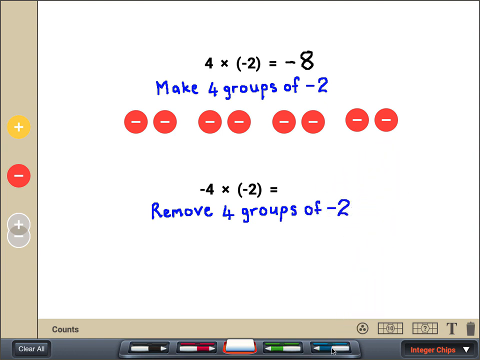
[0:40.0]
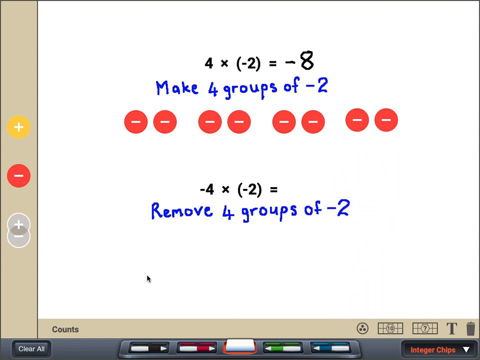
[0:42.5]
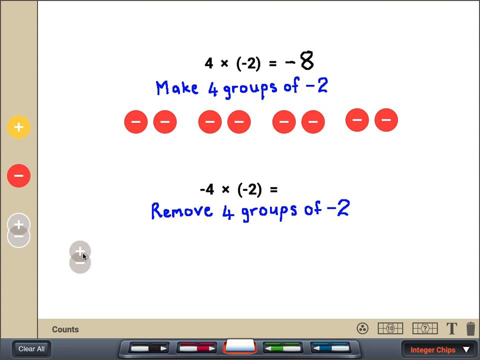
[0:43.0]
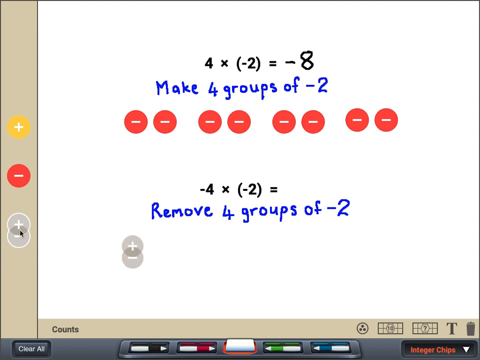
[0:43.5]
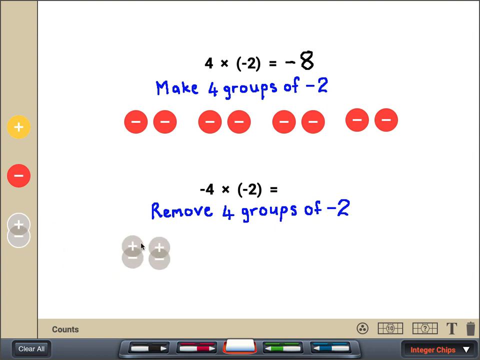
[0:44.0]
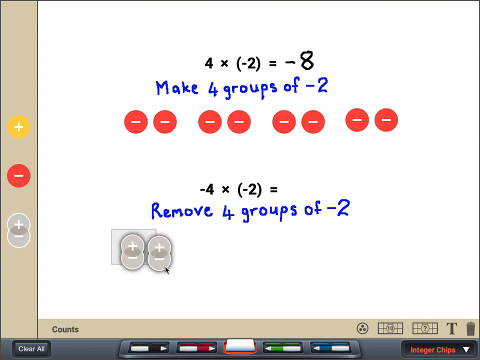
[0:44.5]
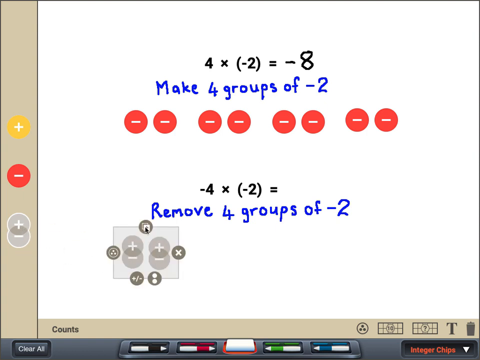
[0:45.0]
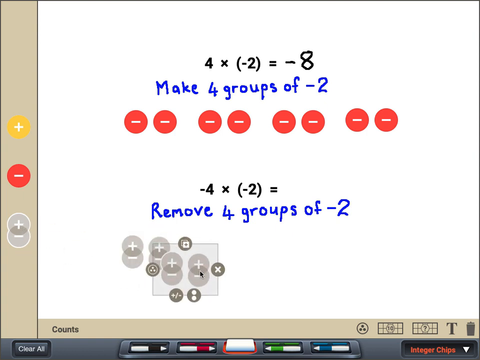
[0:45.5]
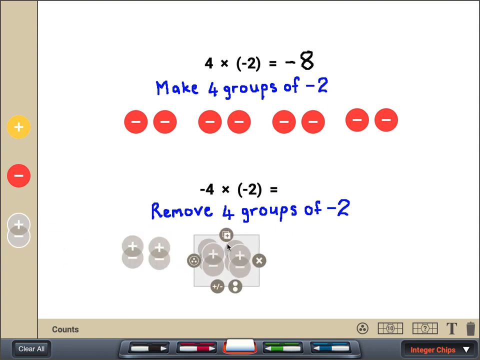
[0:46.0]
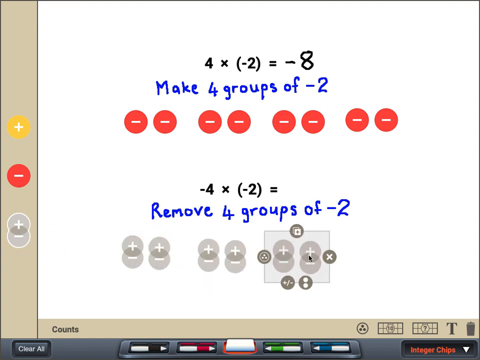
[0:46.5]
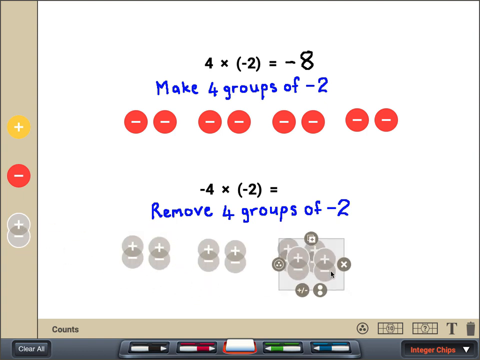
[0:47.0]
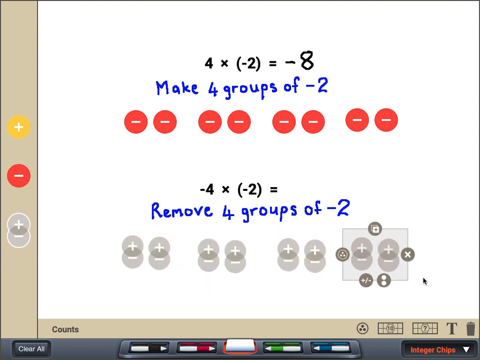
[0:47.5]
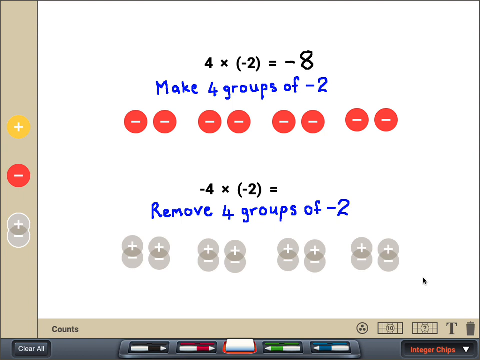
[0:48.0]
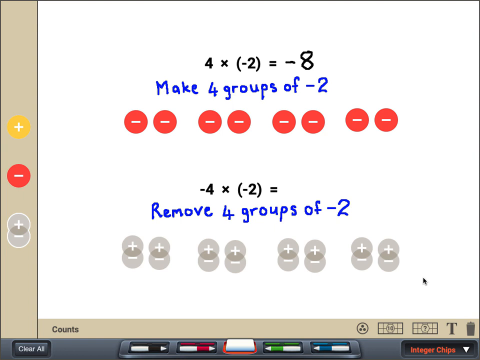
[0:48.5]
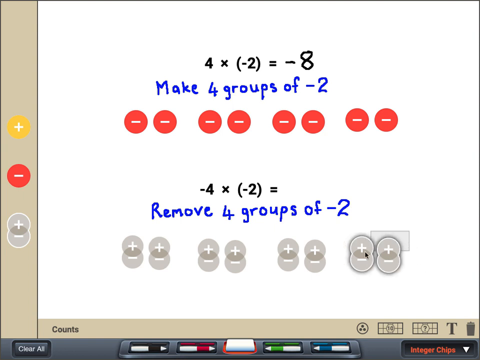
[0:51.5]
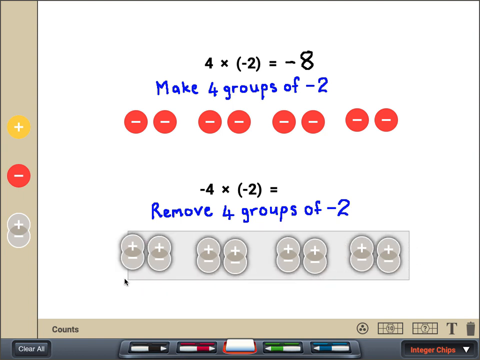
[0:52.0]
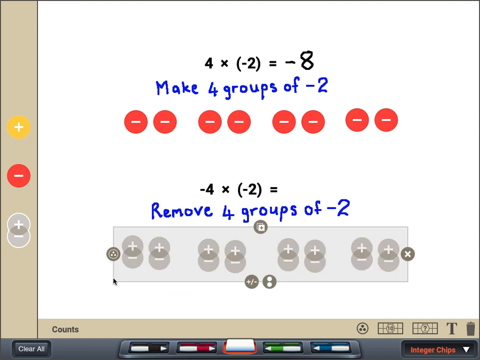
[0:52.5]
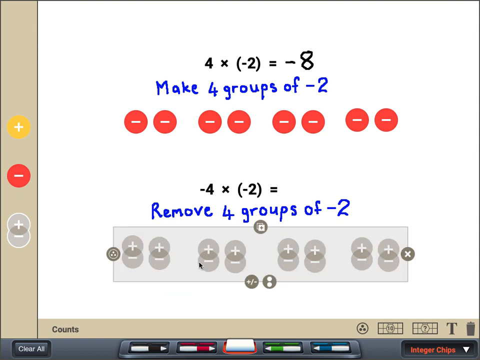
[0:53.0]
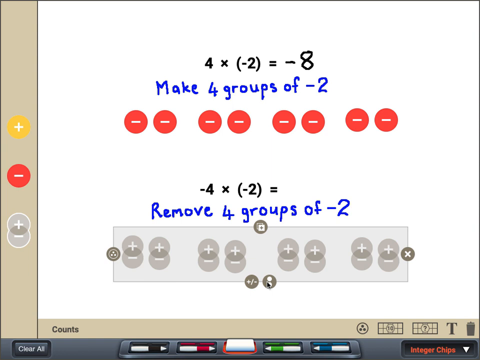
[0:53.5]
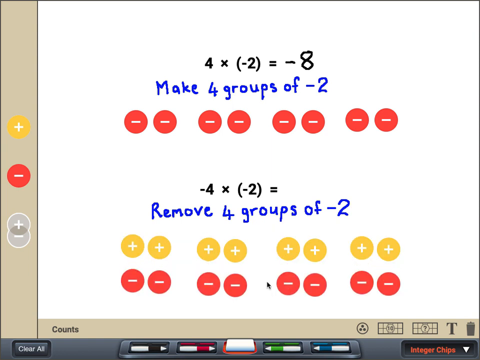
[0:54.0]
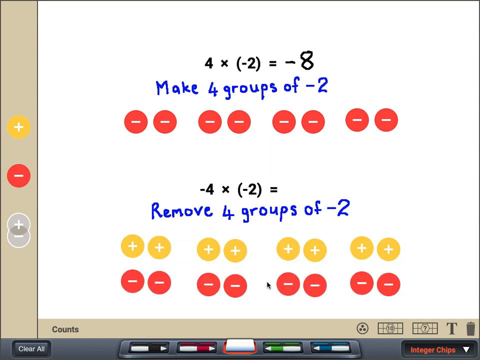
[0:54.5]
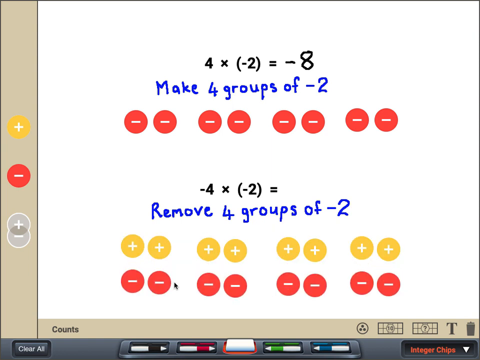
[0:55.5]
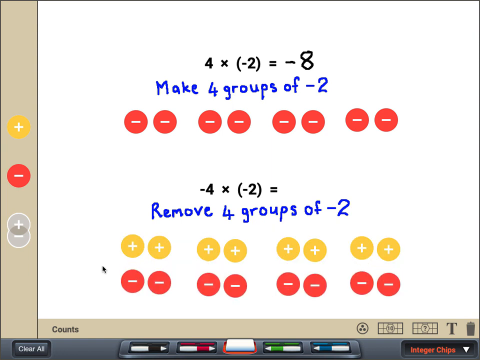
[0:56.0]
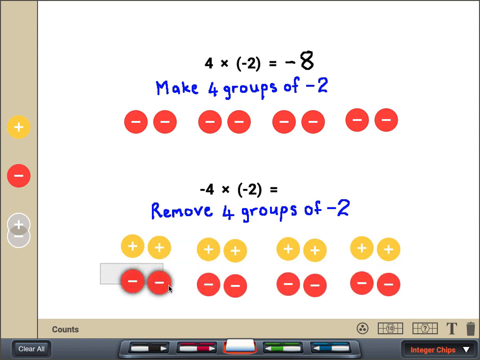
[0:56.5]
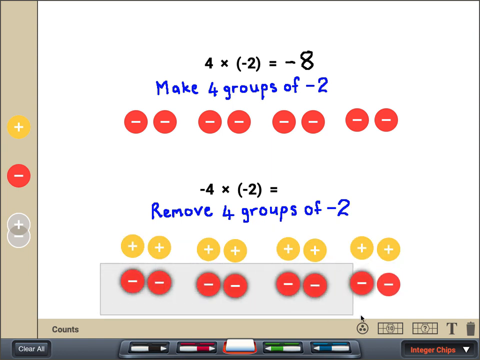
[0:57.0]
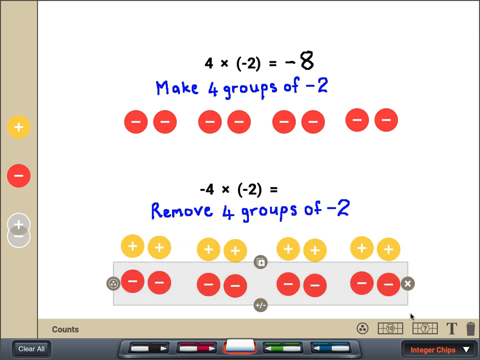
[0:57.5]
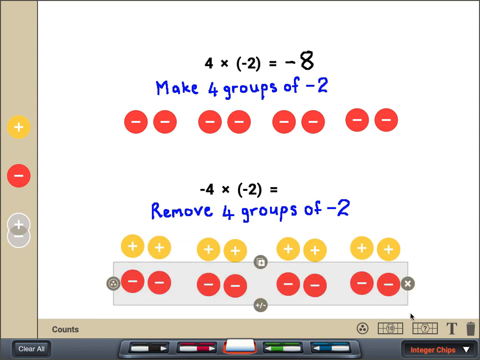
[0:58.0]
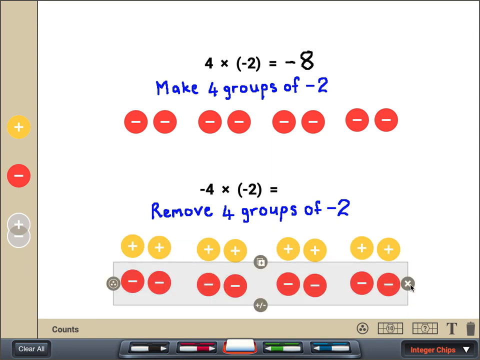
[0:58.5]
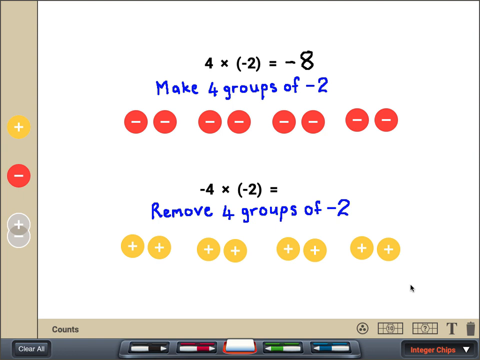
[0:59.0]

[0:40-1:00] The line of blue text drawn by the marker underneath the second mathematical question reads "remove four groups of negative two". A gray icon made of two overlapping circles, one showing a positive sign and the other a negative sign, appears; two of these are dragged onto the screen, and then the group of two is copied and pasted four times. This creates a visual representation of the math problem, and the entire arrangement is highlighted. A button is pressed and the plus and negative circles separate from one another, showing a row of four groups of two yellow circles with plus signs on top and four groups of two red circles with negative signs underneath. The red negative-sign icons are then deleted, and then the positive signs are deleted.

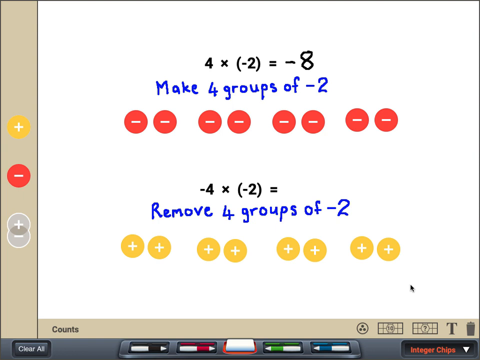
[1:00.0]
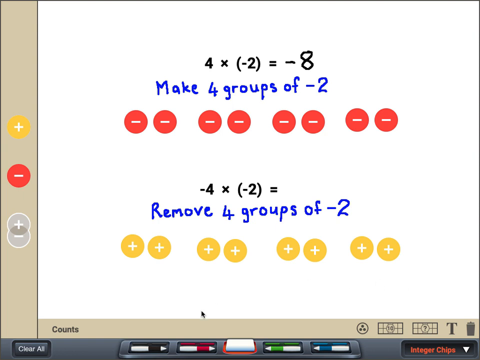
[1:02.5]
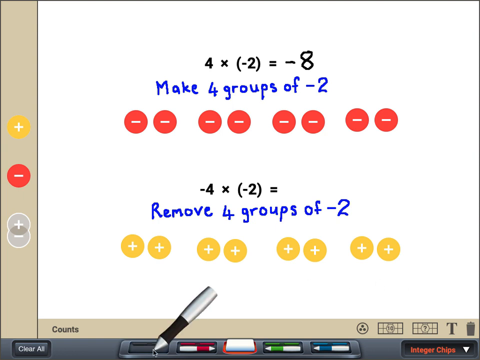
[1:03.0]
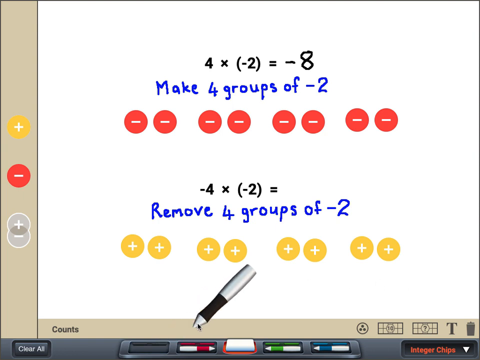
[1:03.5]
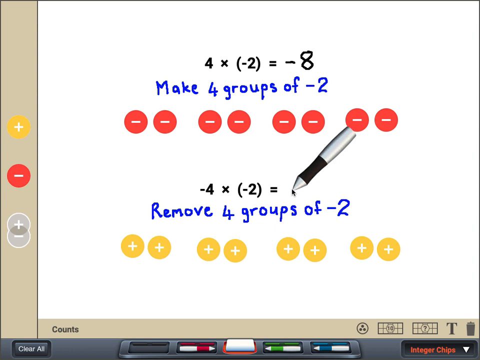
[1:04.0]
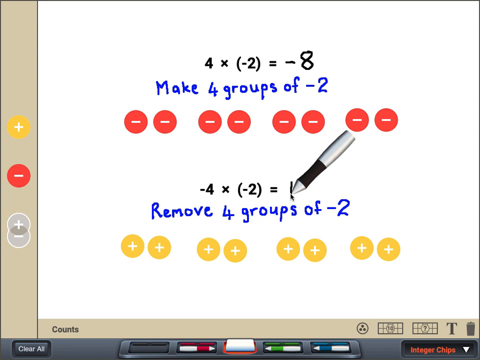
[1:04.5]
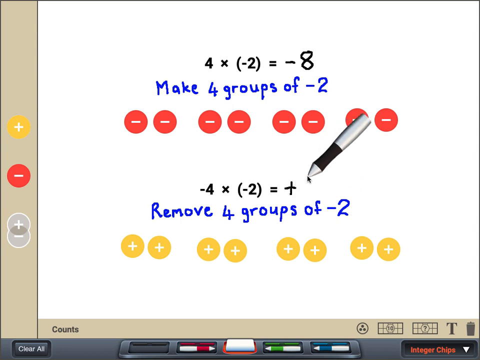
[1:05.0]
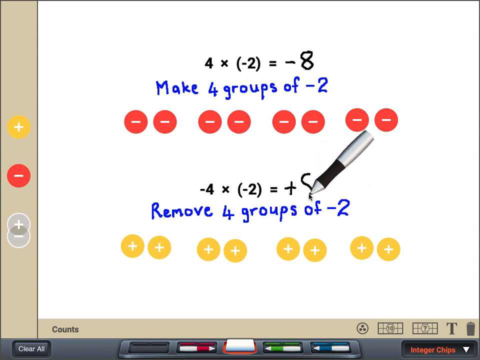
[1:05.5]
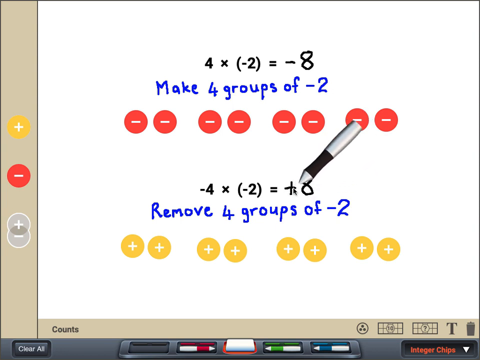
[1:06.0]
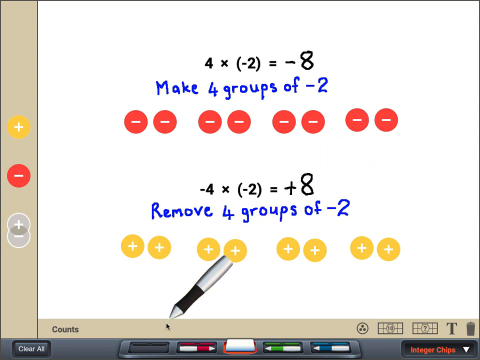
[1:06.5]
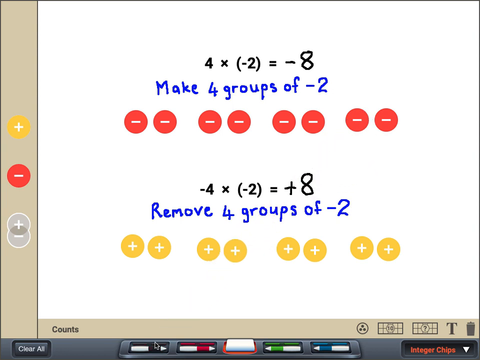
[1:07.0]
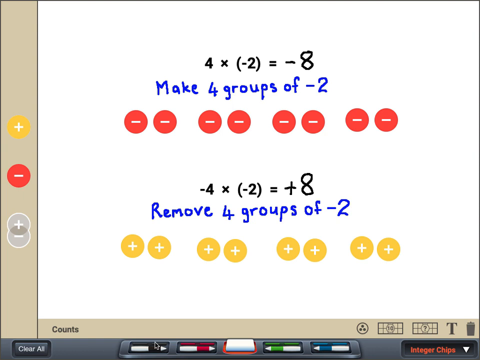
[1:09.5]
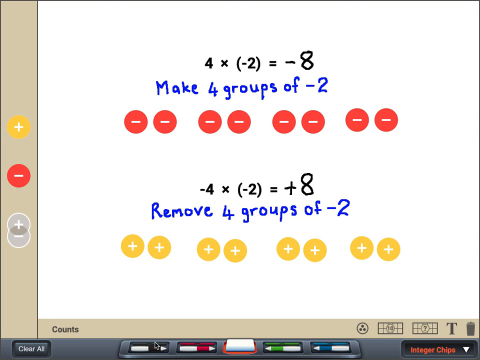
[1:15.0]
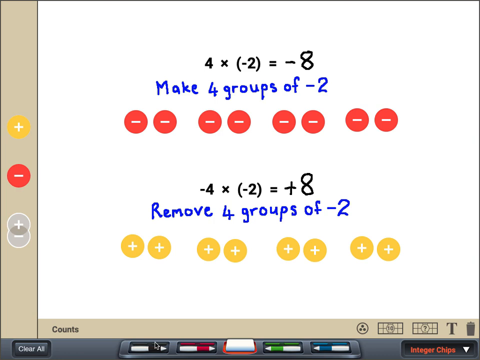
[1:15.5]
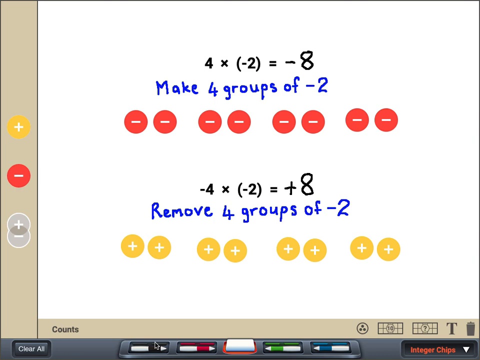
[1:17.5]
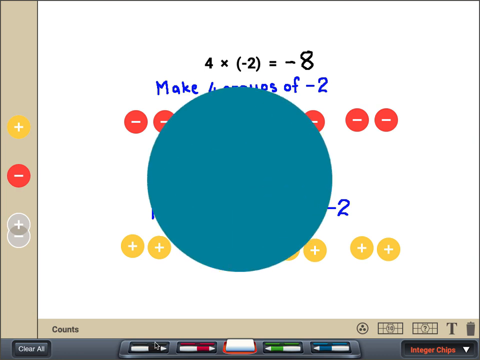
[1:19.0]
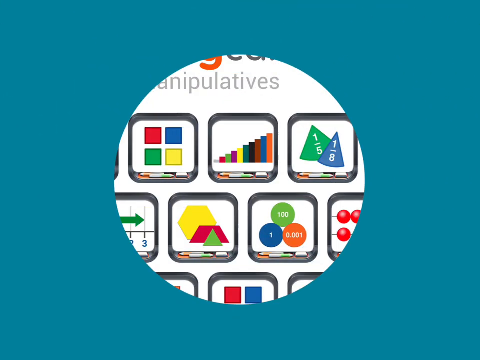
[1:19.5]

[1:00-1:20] Four groups of yellow circles with positive signs in them are on the screen. The black marker appears again and writes "+8" to the right of the equal sign under the second question, leaving eight positive circles on the screen as the answer. The screen then transitions with the same circular animation, and the Braining Camp logo is shown at the top of the screen. Underneath the logo are the words "digital manipulatives". Near the bottom of the screen are many previews of different icons, drawings and creations in the same whiteboard format, arranged in three rows.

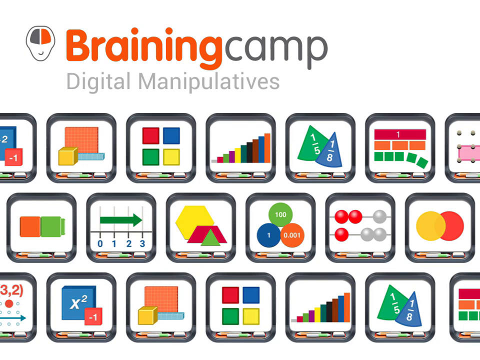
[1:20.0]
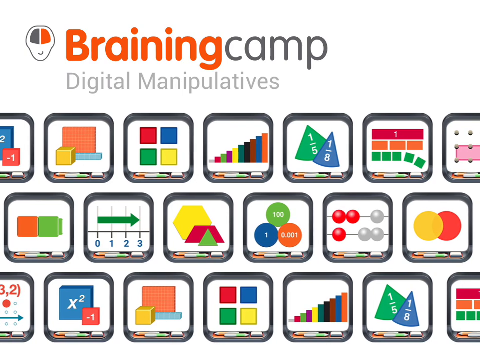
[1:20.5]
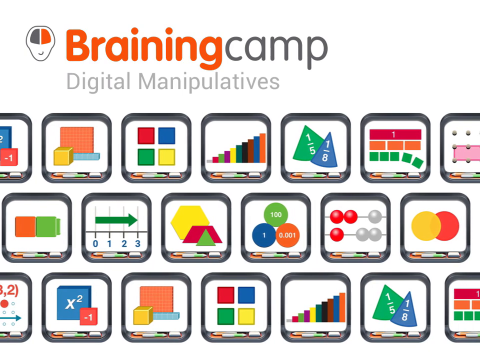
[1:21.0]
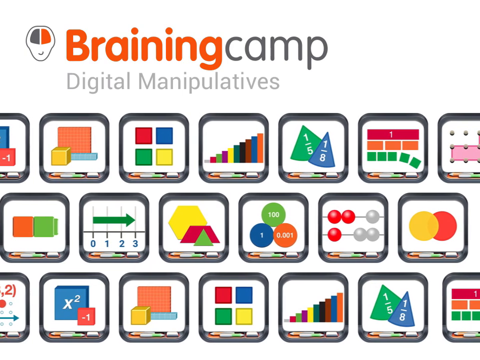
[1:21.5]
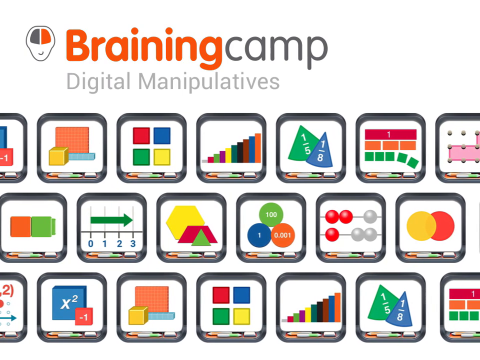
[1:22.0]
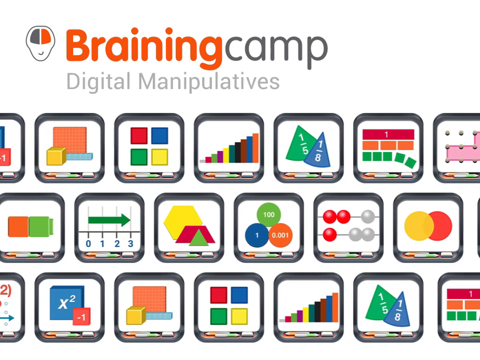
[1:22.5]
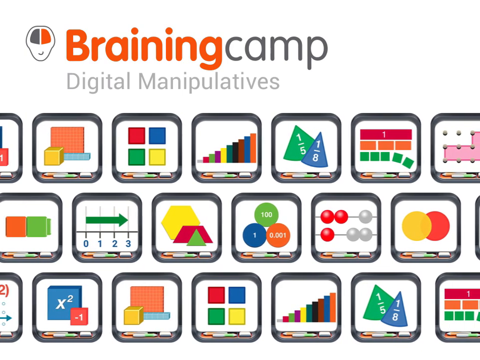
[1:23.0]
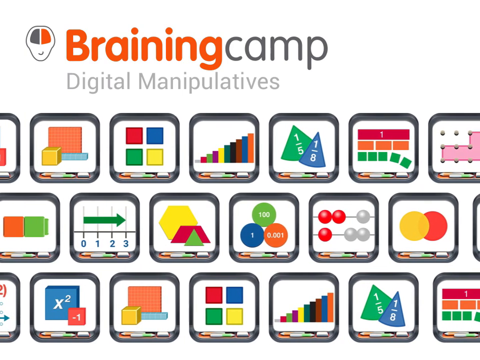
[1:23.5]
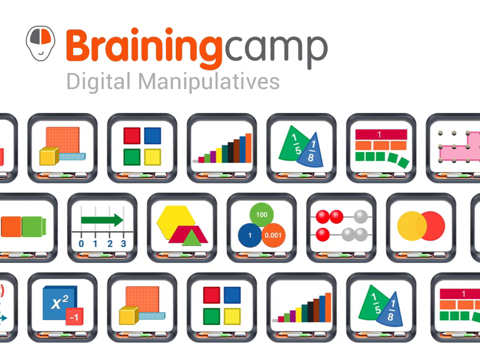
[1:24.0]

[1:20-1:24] The Braining Camp logo is at the top of the screen on a white background, with "digital manipulatives" underneath it. From approximately the middle of the screen all the way to the bottom are three rows of icons showing different digital manipulations of mathematical functions and concepts. The rows are very colourful and in a whiteboard style, and the rows of video previews move from the left to the right side, sort of in a panning motion, before the video ends.